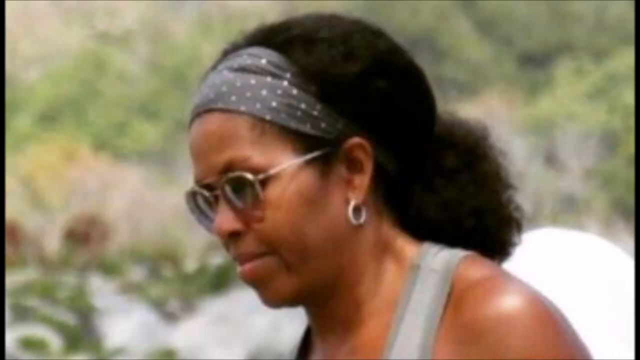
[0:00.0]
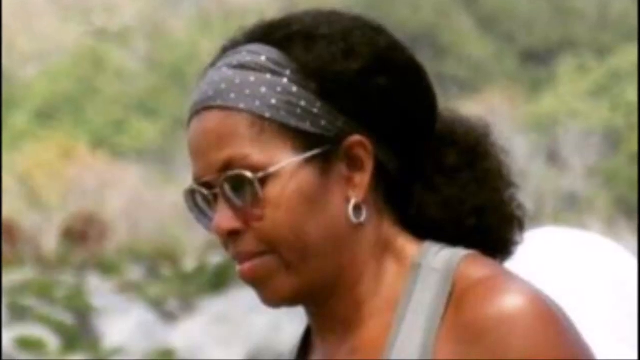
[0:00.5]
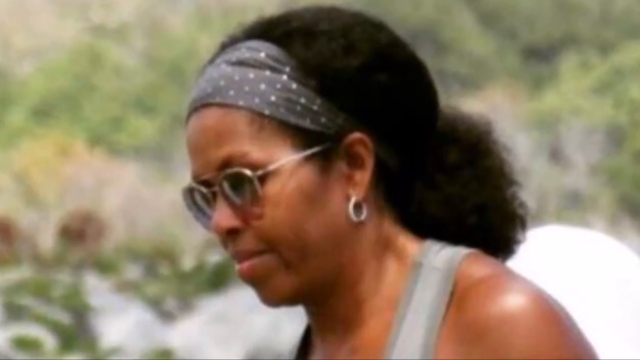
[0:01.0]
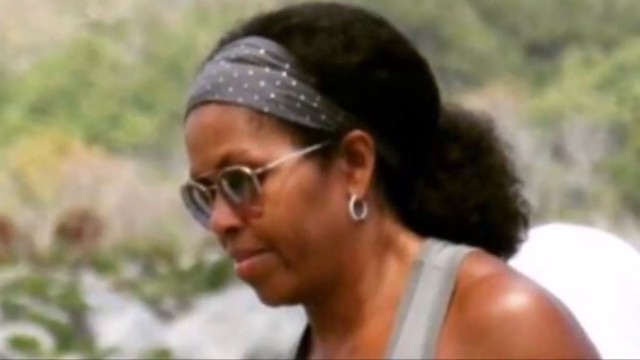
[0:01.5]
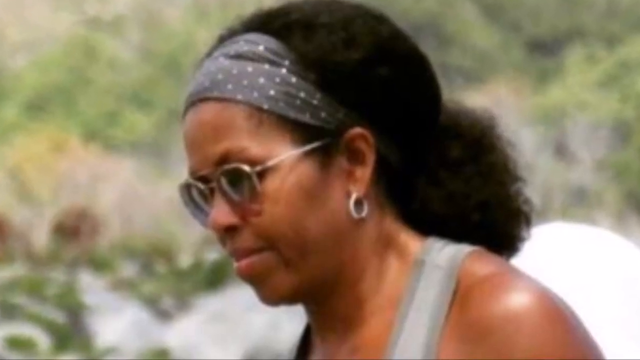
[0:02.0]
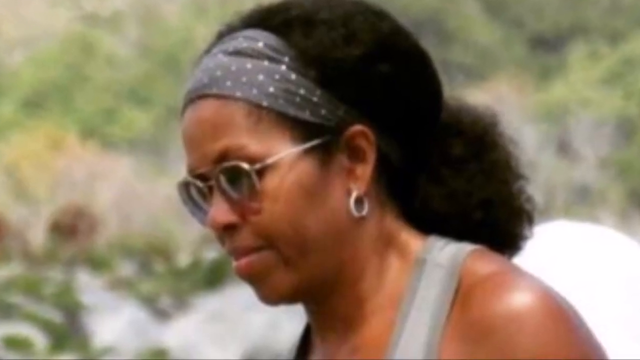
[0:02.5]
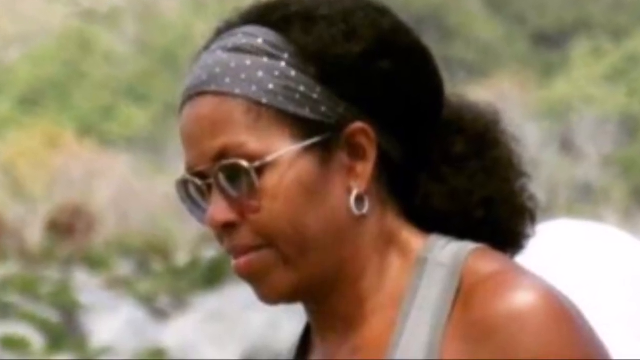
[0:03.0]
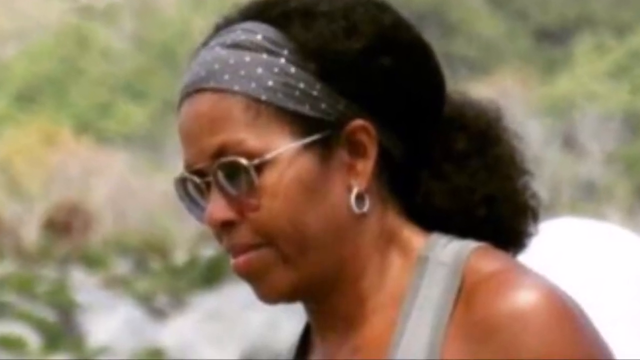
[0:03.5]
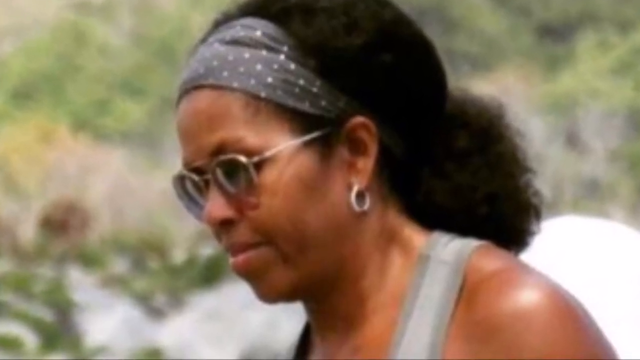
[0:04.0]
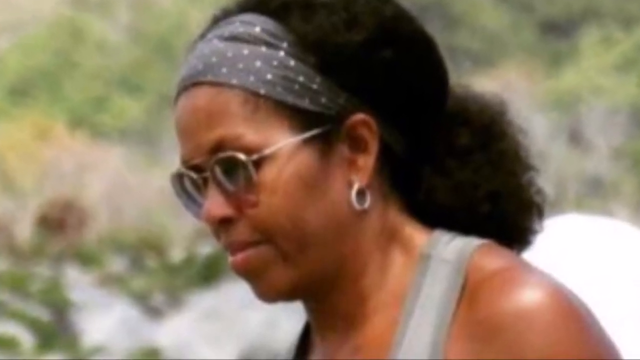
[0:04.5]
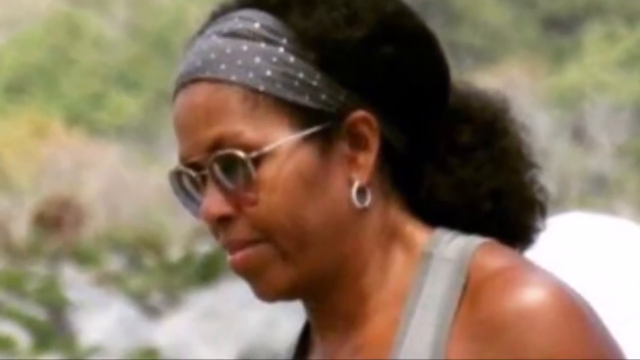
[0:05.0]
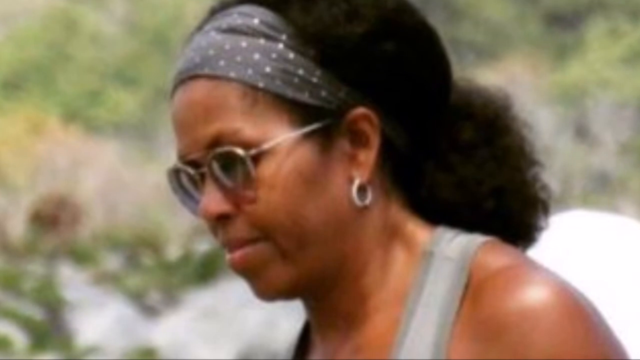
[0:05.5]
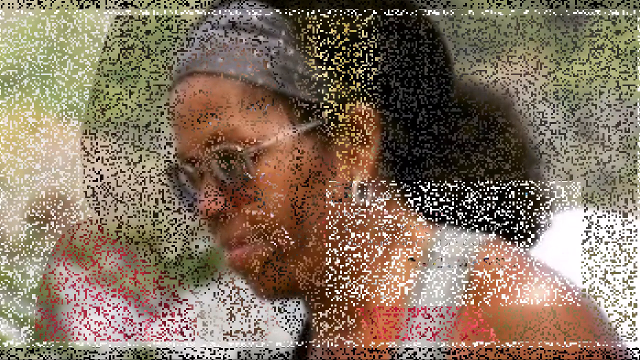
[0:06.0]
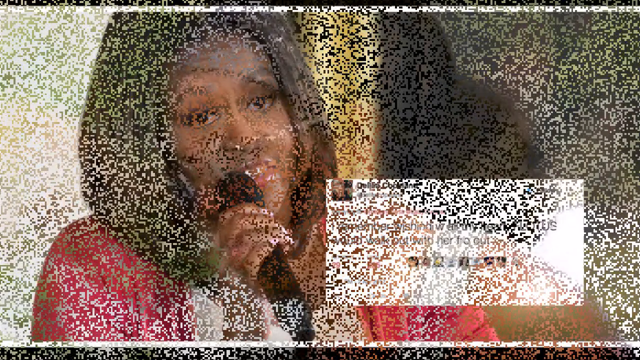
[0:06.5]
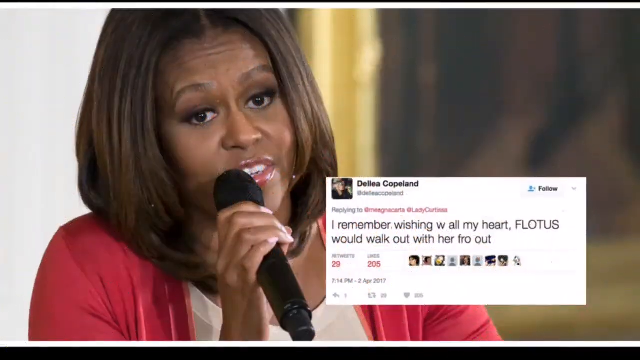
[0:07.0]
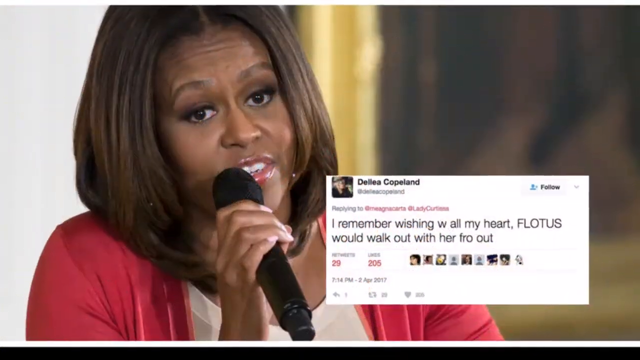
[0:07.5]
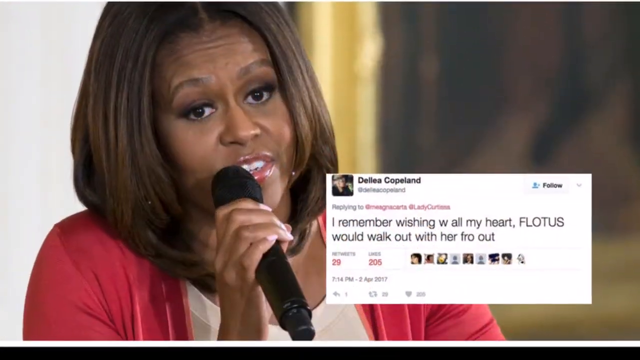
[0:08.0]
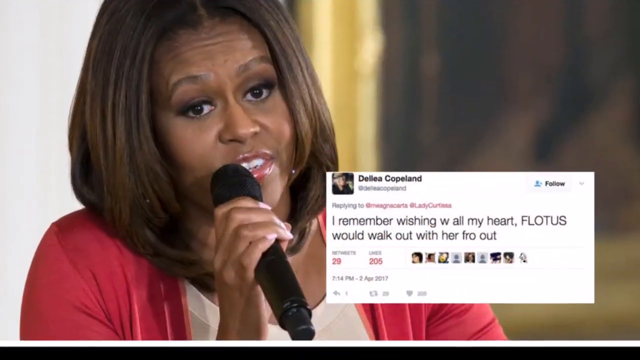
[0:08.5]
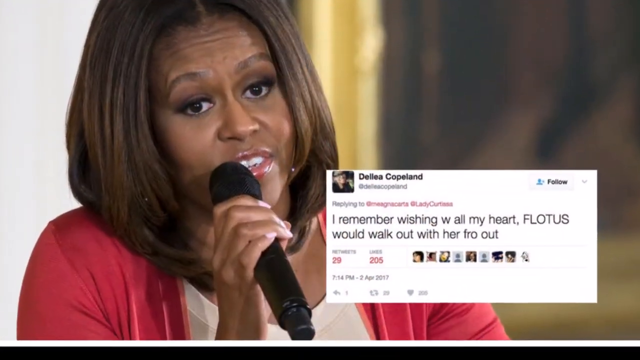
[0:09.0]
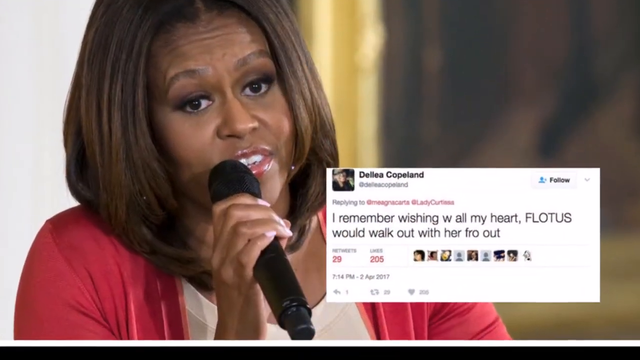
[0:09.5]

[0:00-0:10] A picture shows a woman who seems to wear glasses and a durag to support her hair; she looks African, slightly brown. She has earrings on her ears, wears a top, and has slightly long black hair. In her background, trees are visible in the far distance. The next image shows another lady holding a microphone, with a nice hairstyle with a white tip, nice eyes, and a red jacket. A pop-up on the screen contains text beginning "I remember wishing you all". Below the text in the pop-up are some small images and numbers such as 29 and 205. The post seems to be posted by someone called Delile Copeland.